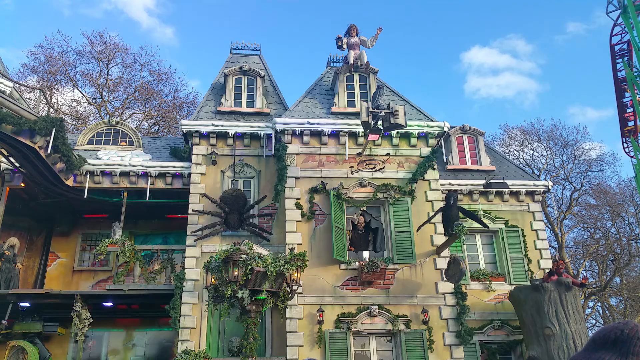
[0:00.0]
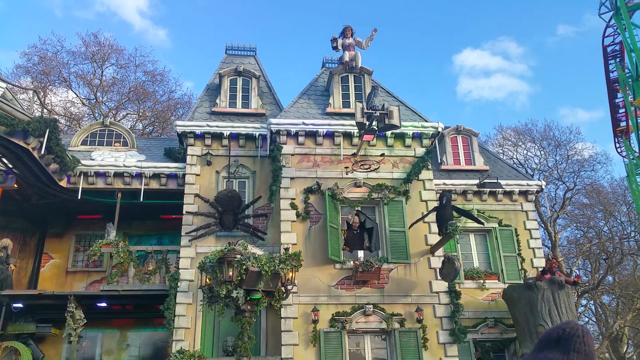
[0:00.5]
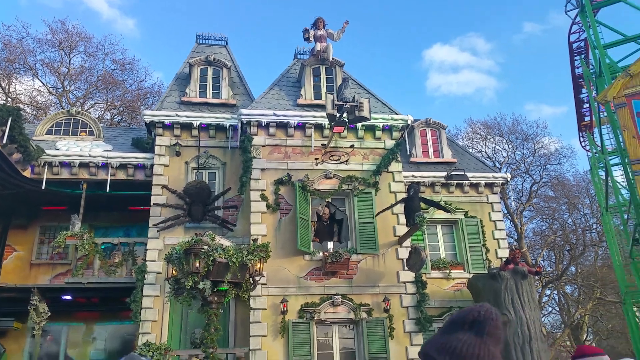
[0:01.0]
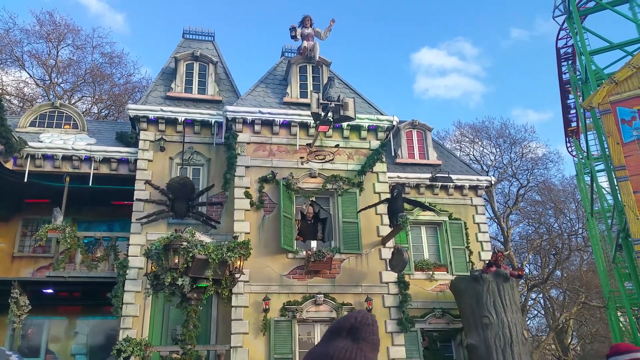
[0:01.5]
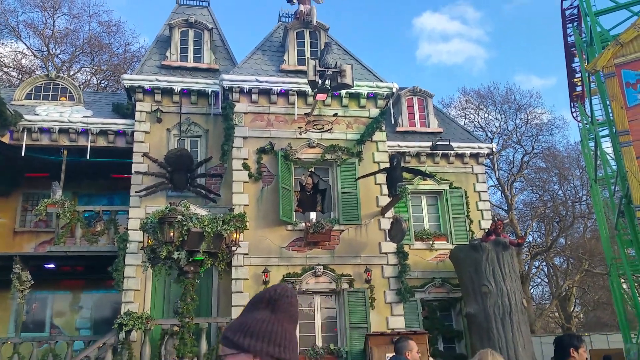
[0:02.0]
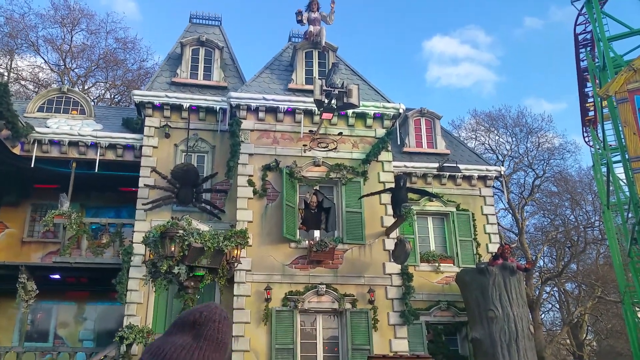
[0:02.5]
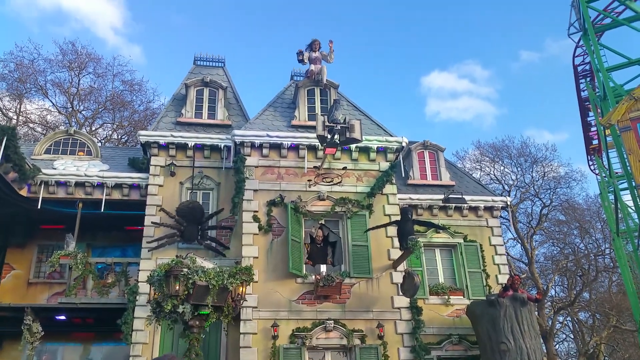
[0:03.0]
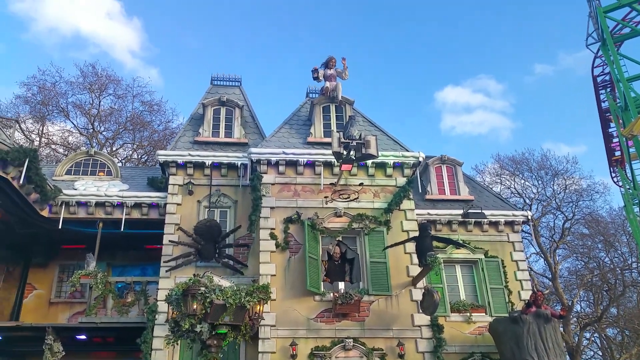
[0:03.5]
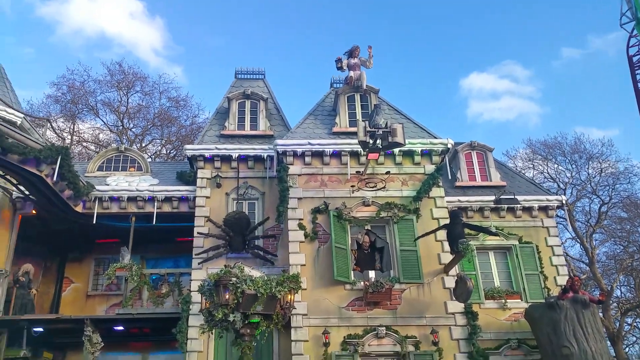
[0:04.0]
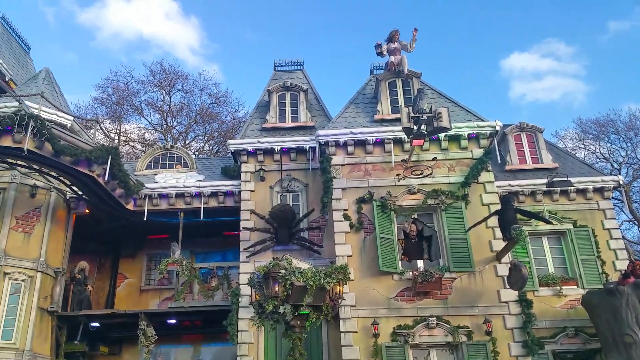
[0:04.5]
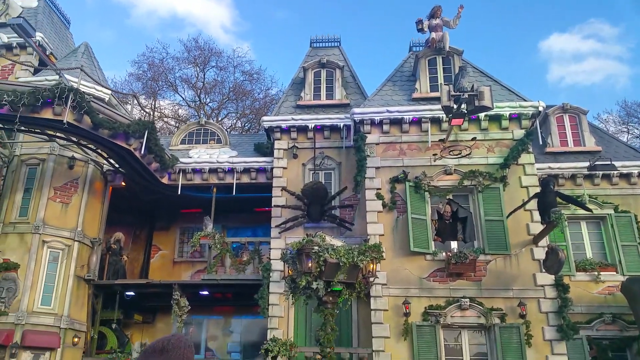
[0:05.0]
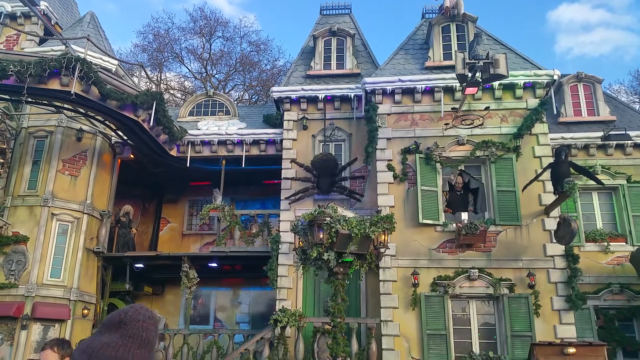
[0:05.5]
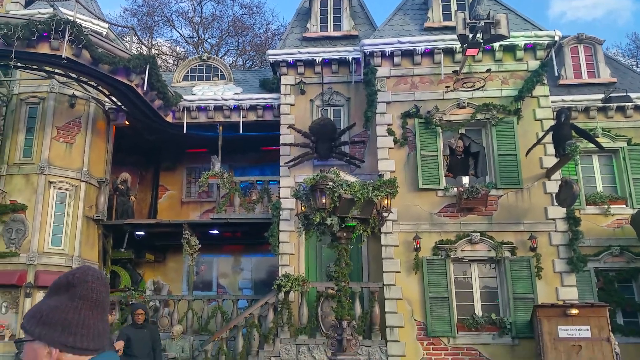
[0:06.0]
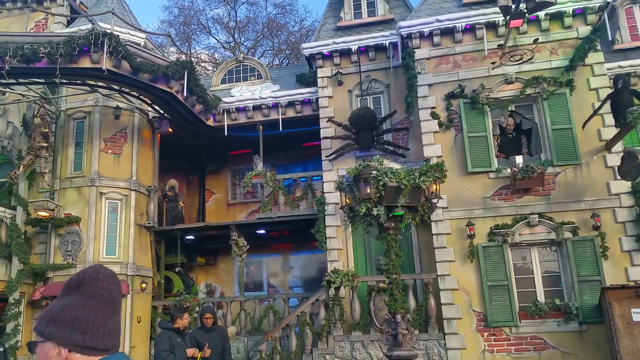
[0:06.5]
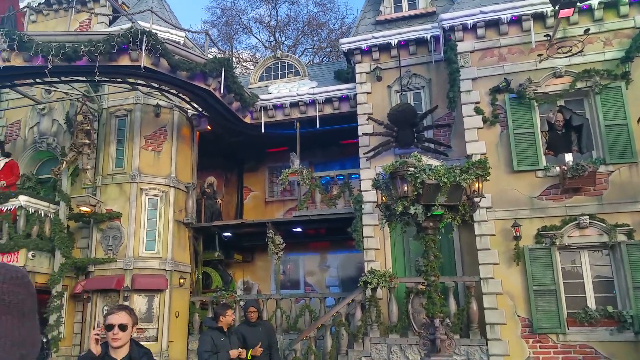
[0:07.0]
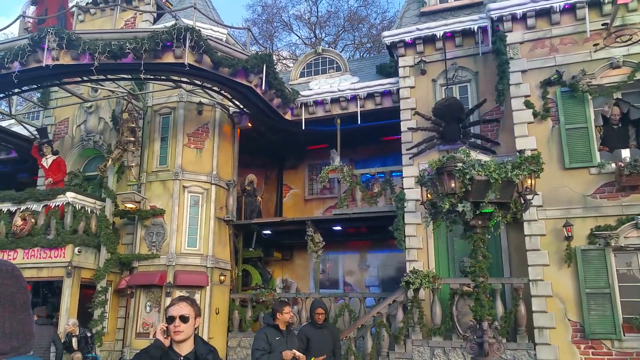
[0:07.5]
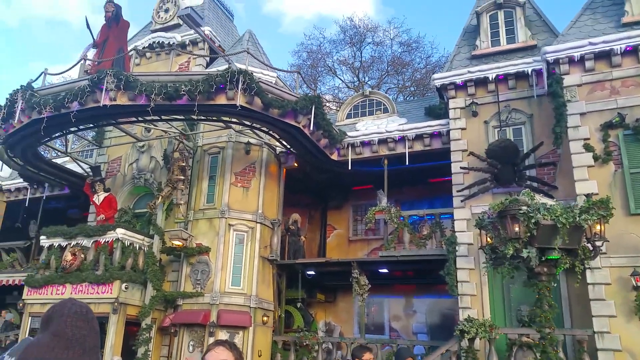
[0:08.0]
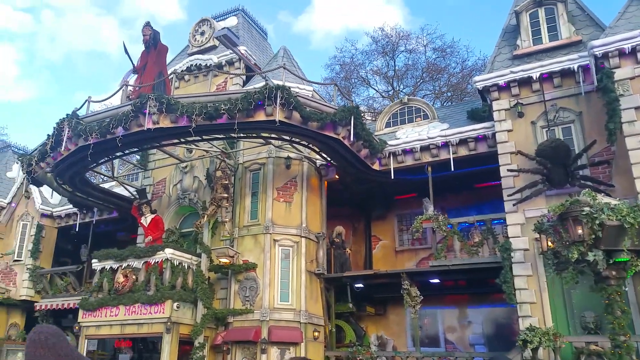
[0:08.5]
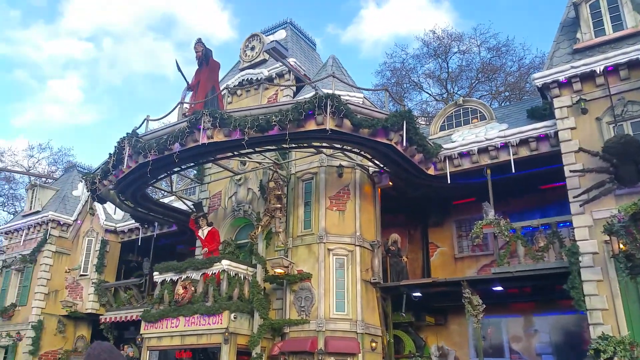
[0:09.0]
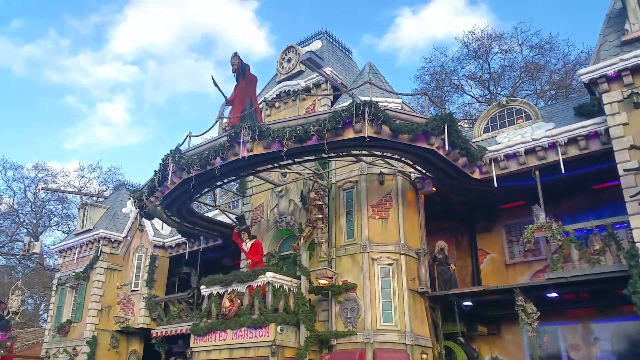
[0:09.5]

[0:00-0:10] Someone films an intricately decorated house, with multiple sides displaying different sections of the house; the home appears to be decorated for Halloween. A large spider is in the center of the frame, then the camera pans to the left to a large balcony where a man dressed in red stands on top. The trees in the background are mostly bare. It is daytime, with a blue sky and minimal cloud coverage. People walk about in front of the house, a woman and a man, with only the tops of their heads visible, as the video focuses mostly on the upper story of the home.